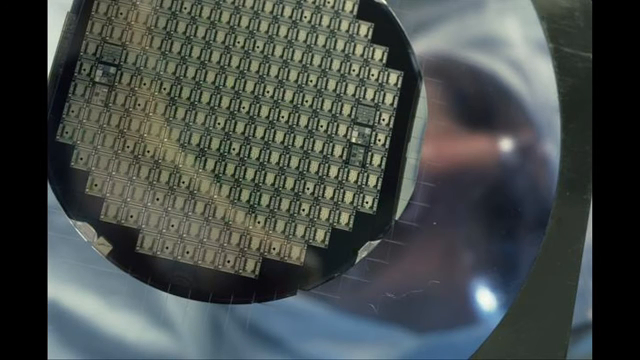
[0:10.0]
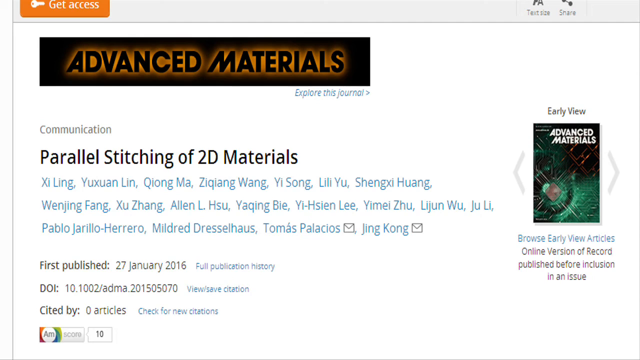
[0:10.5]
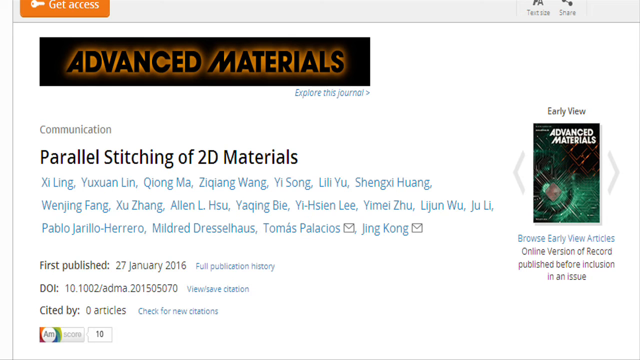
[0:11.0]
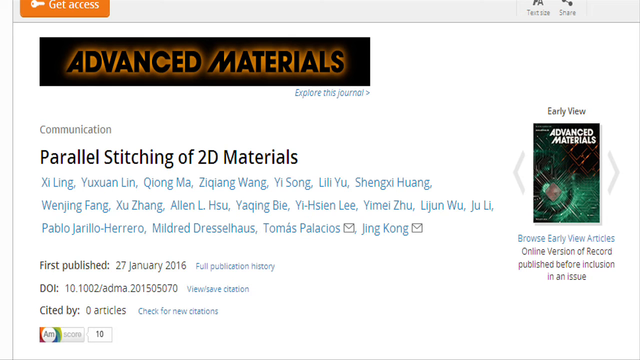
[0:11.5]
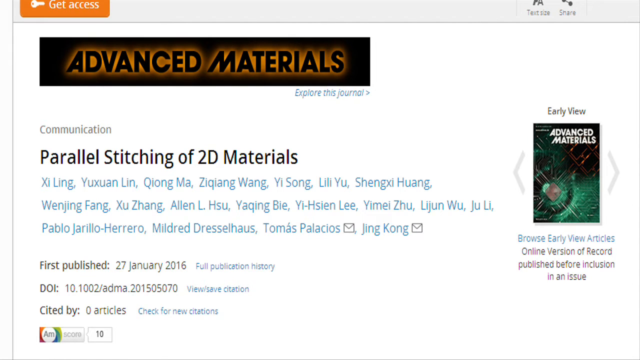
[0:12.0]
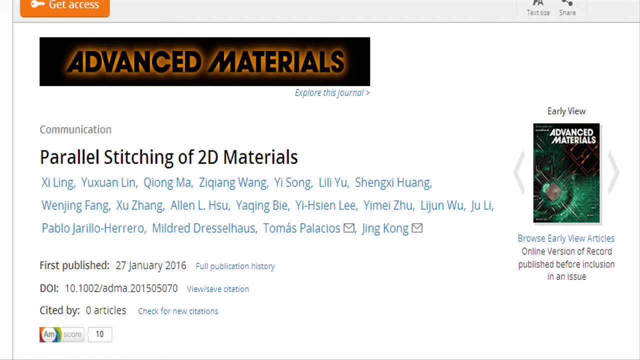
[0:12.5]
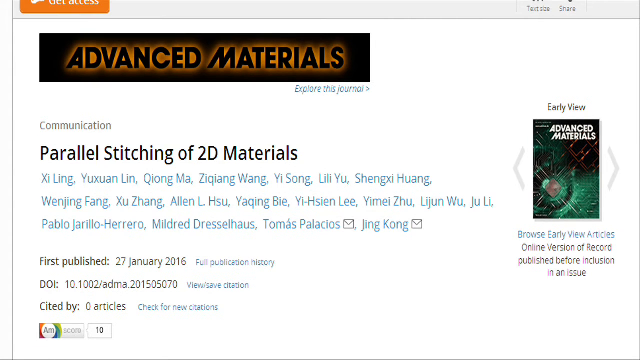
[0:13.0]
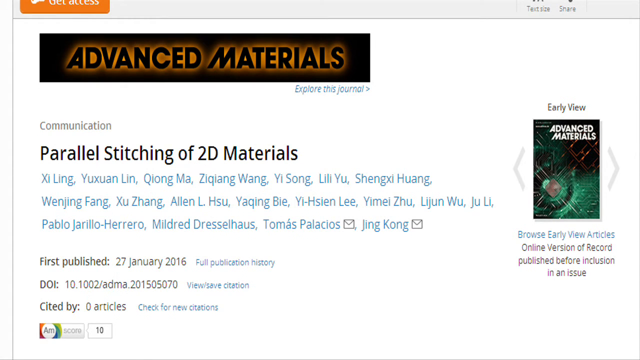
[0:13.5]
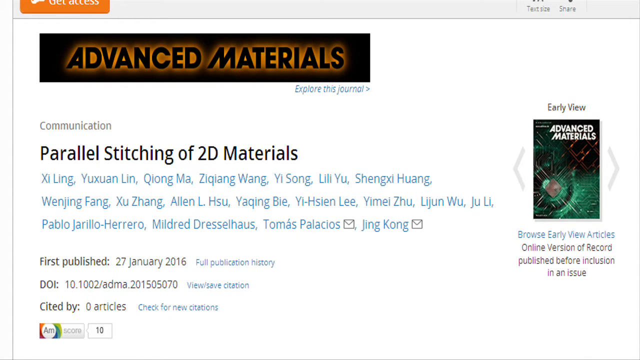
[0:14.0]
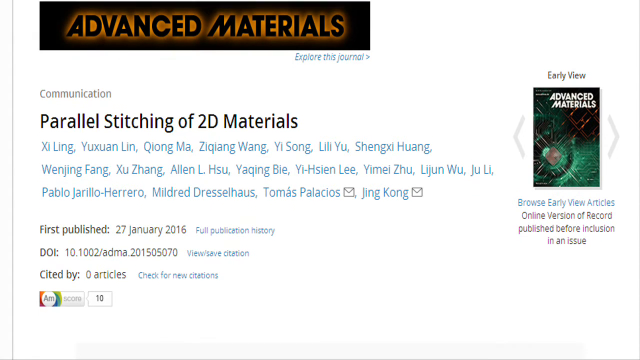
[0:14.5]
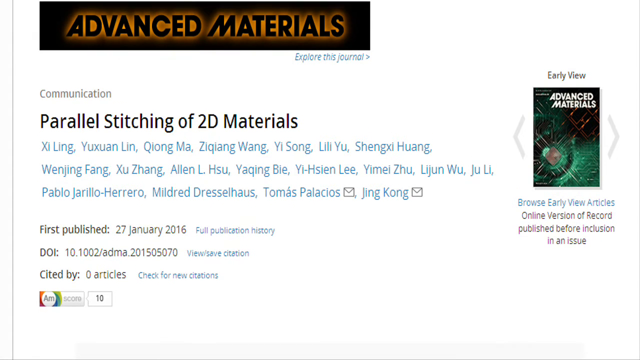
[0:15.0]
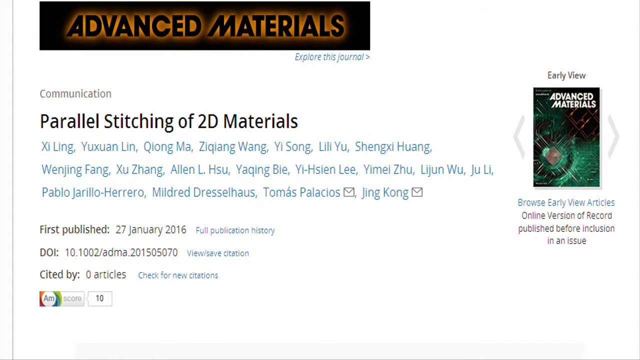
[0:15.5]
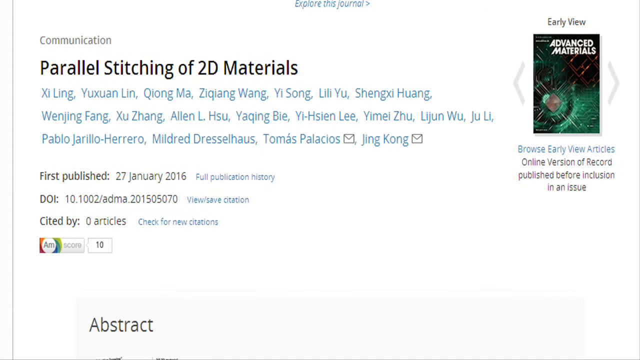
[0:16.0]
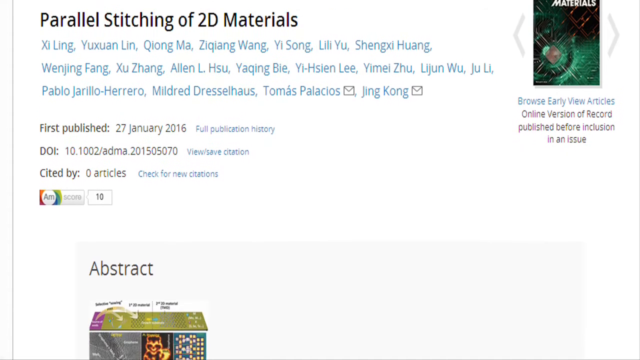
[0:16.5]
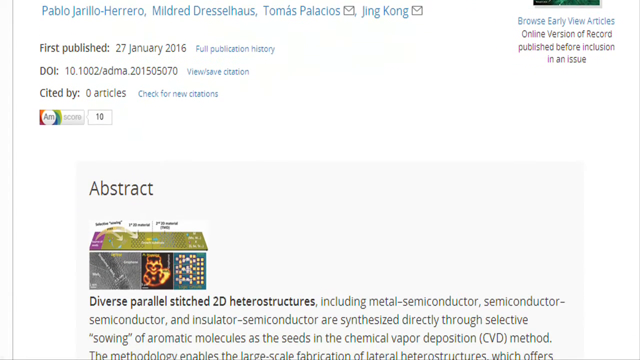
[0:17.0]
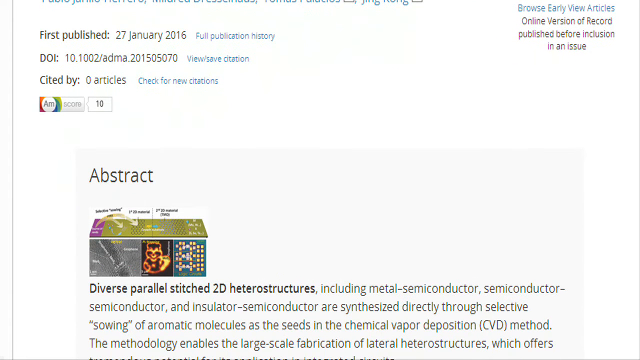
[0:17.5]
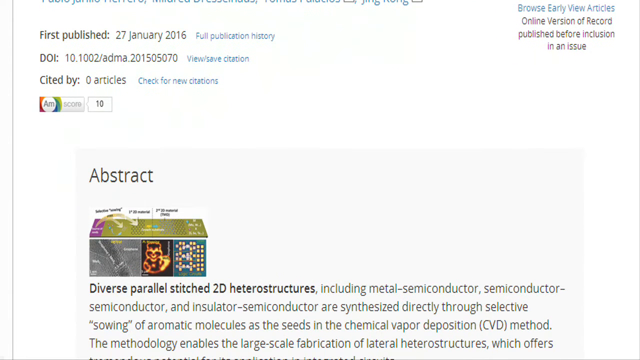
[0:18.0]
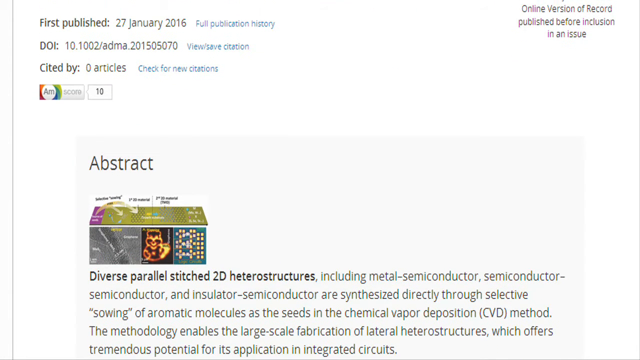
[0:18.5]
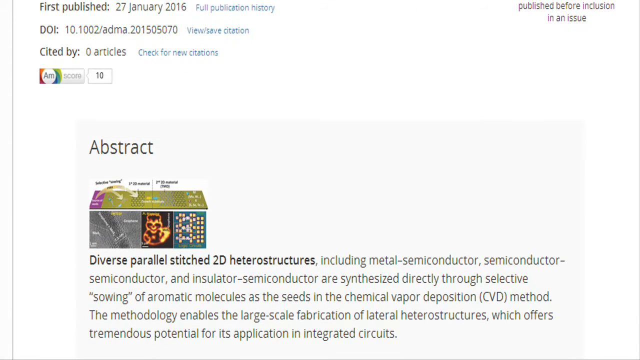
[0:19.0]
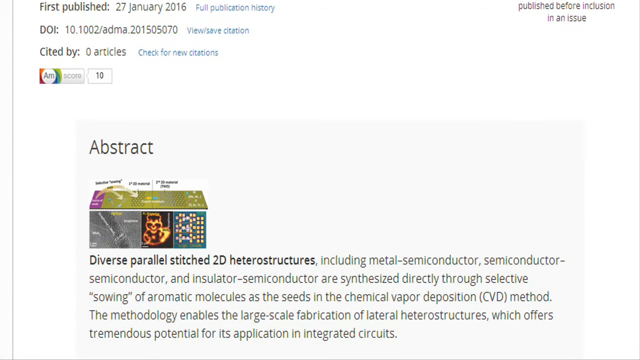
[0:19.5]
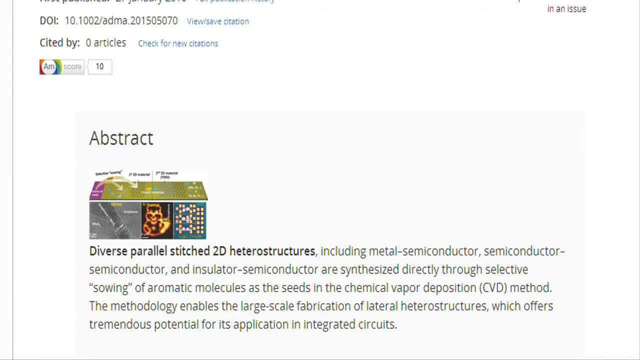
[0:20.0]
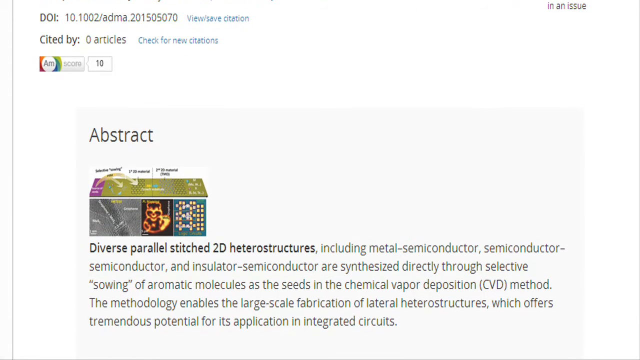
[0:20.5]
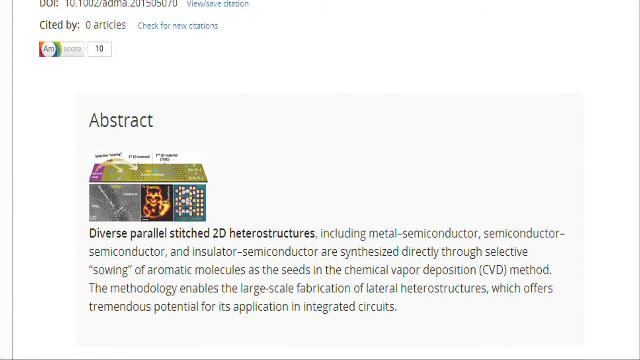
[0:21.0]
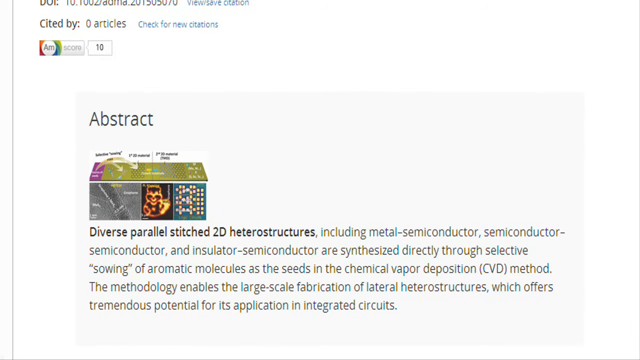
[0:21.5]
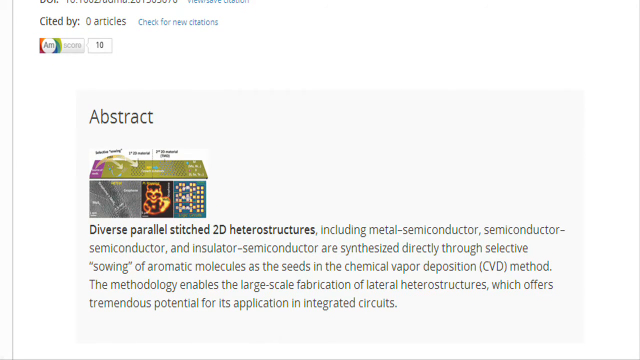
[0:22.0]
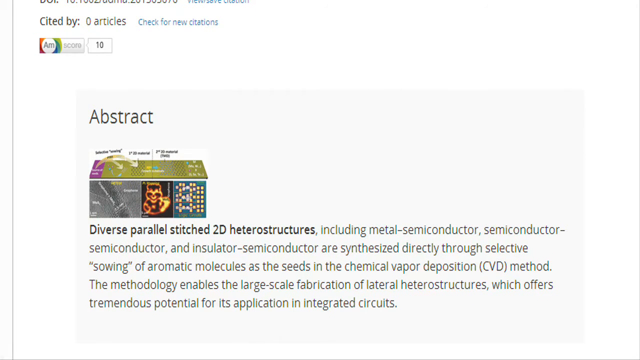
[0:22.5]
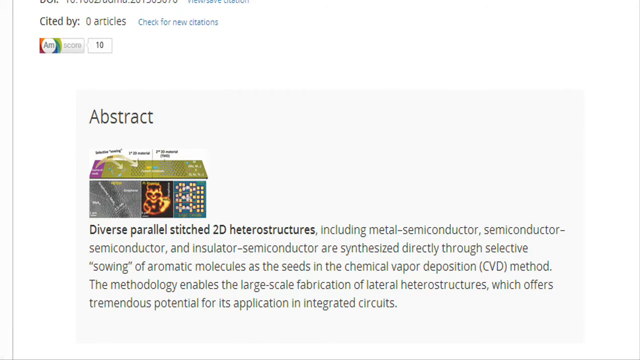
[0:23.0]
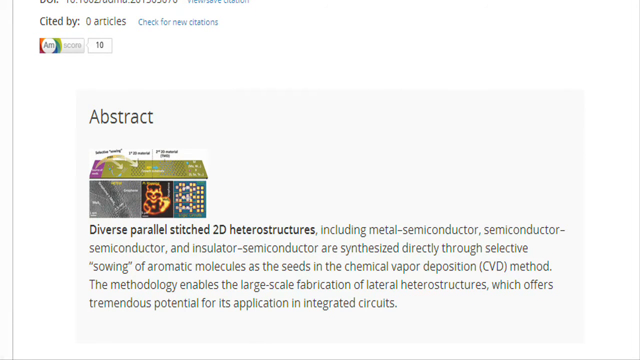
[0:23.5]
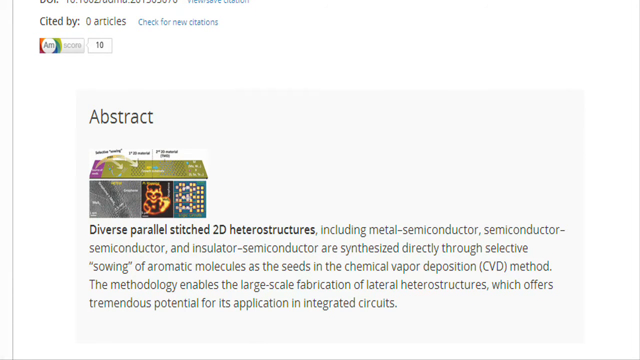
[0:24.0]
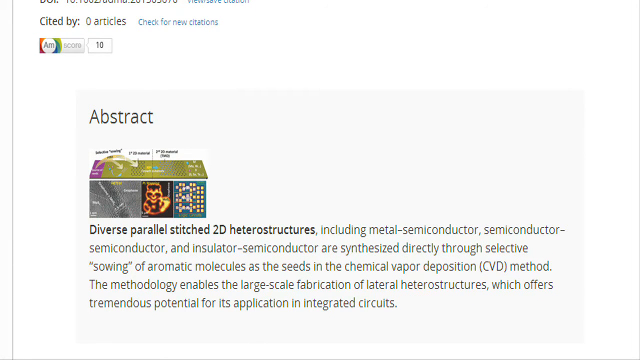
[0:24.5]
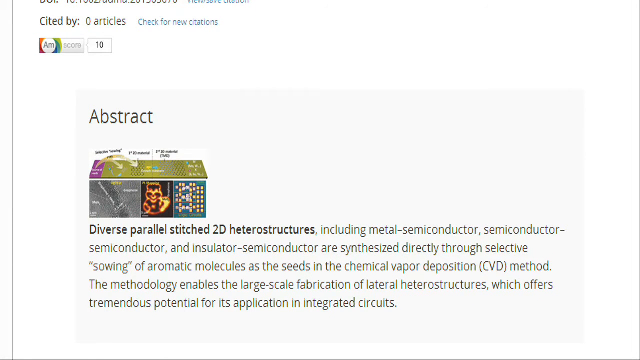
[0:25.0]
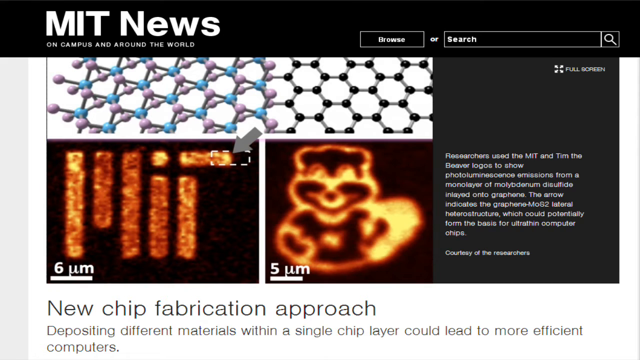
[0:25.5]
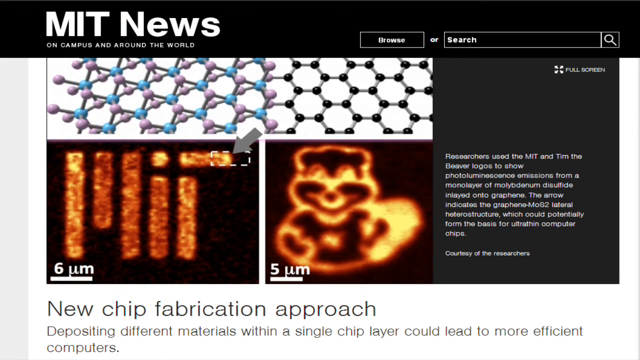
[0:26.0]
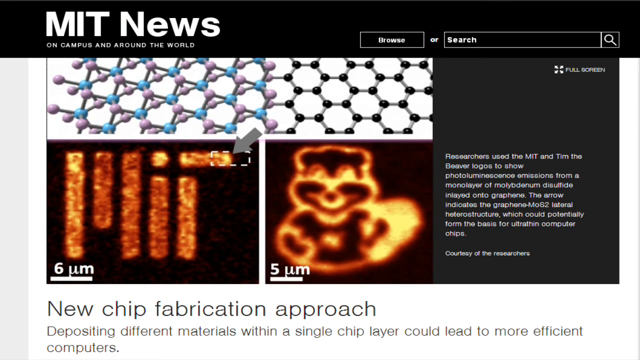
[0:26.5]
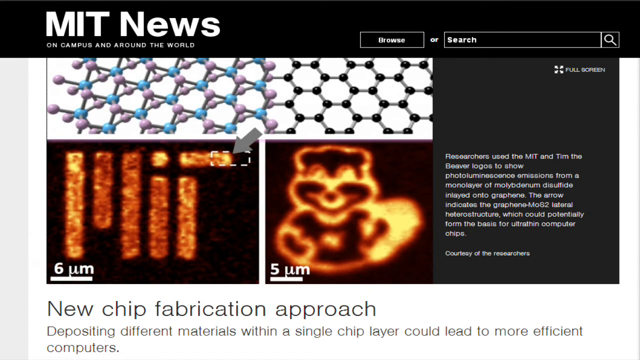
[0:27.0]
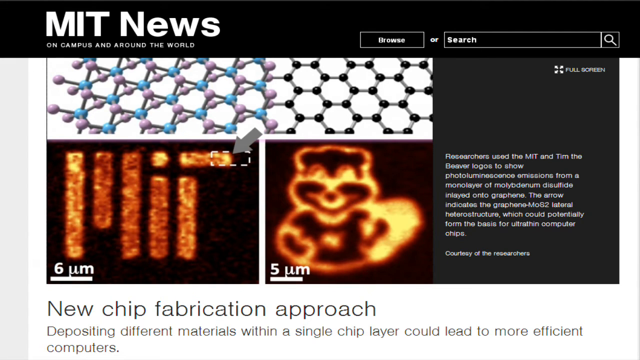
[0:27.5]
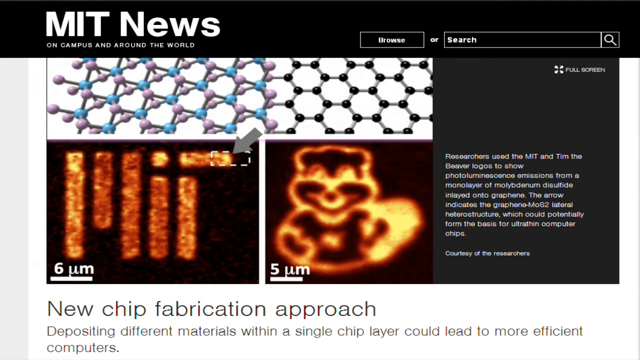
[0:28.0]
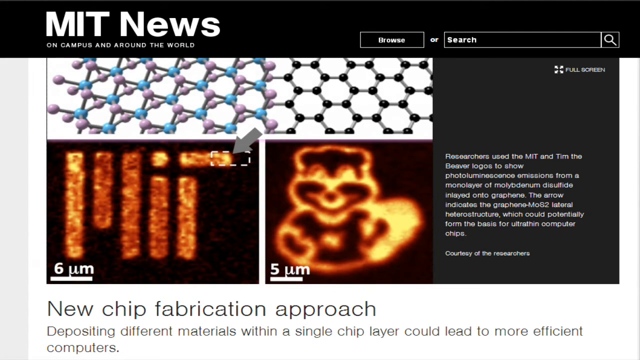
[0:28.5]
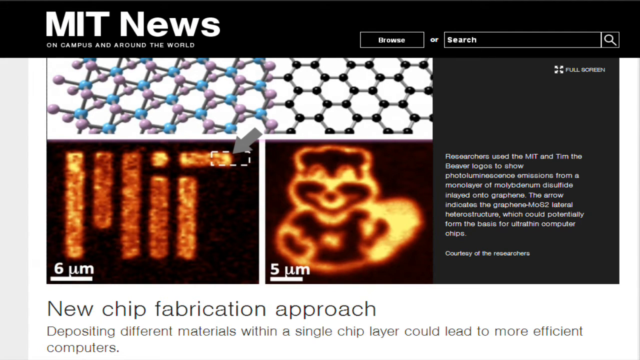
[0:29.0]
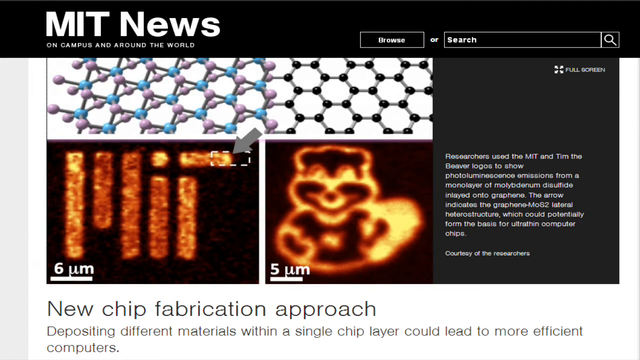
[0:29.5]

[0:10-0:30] A wafer picture appears, then the view shifts to an academic article in Advanced Materials Communication titled "Parallel Stitching of 2D Materials." It lists a large number of authors, along with the DOI and publication date. The page scrolls to show the abstract. The video then cuts to MIT News, which has a black background and some yellow shapes that look like some type of magnetic imprint, almost like an infrared view. There is also a picture of a lattice and a highlight of something that looks almost like a bear. The MIT News lettering is white, the rest of the page has a black background, and on the right-hand side there is additional content in white lettering.